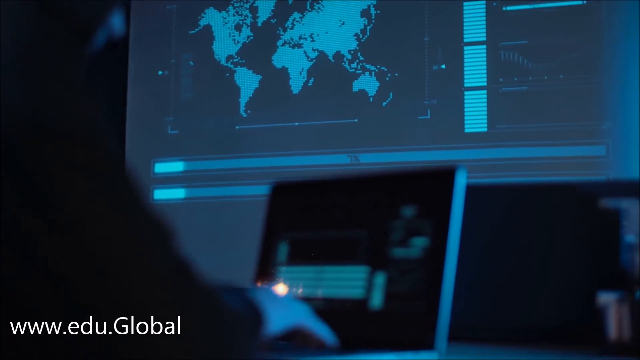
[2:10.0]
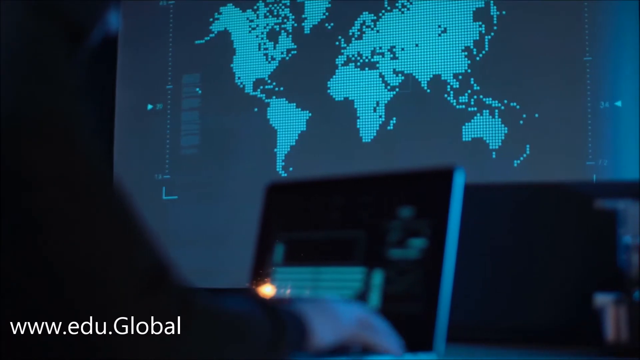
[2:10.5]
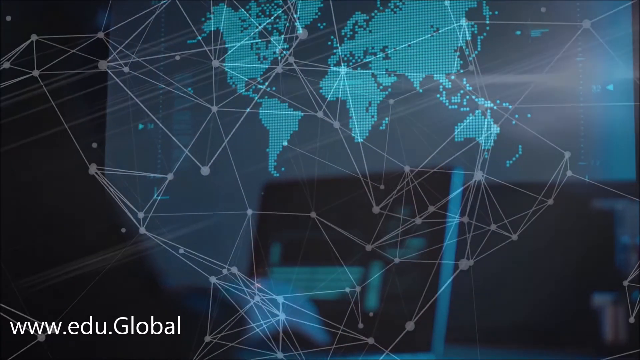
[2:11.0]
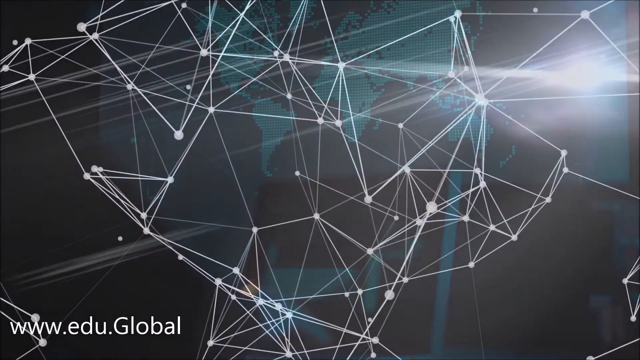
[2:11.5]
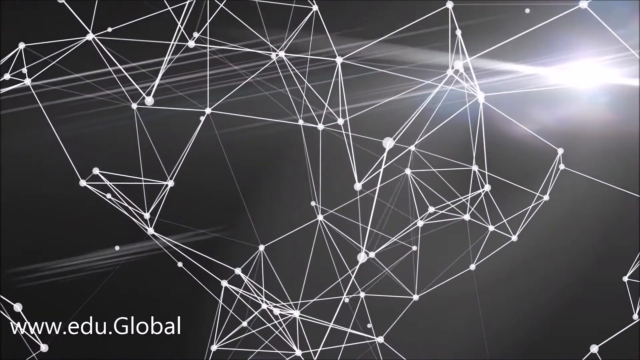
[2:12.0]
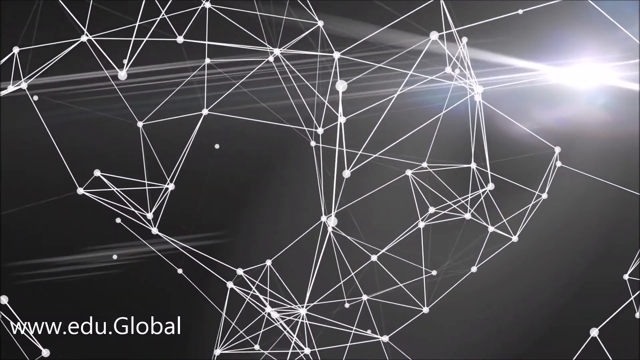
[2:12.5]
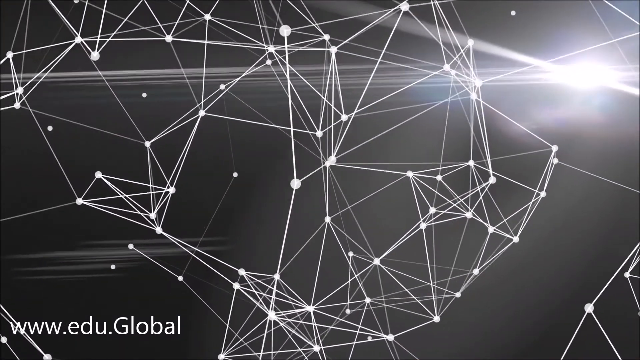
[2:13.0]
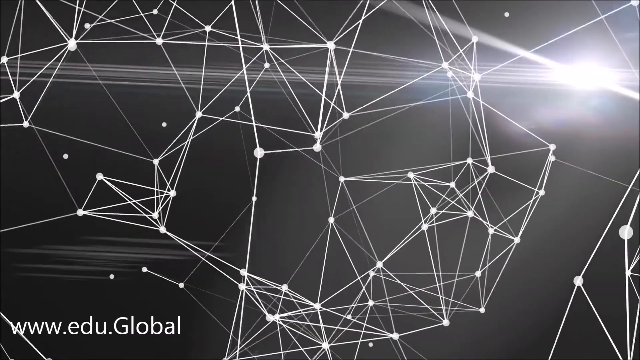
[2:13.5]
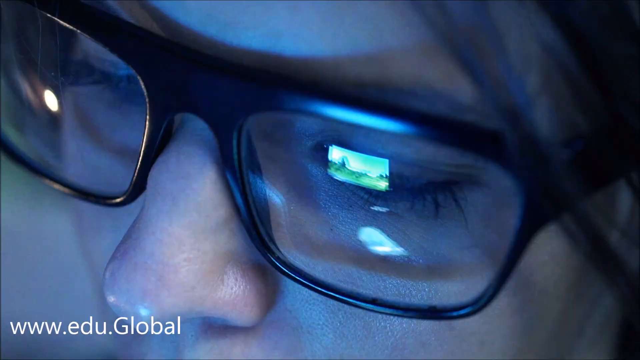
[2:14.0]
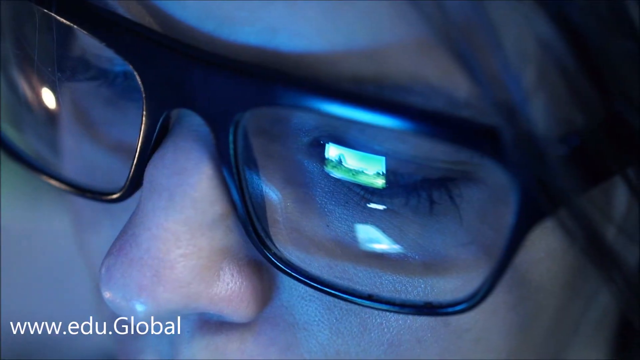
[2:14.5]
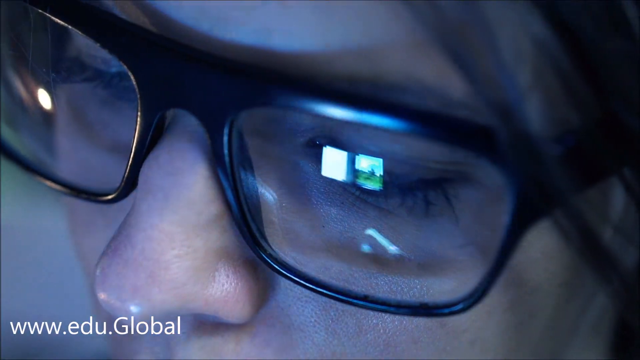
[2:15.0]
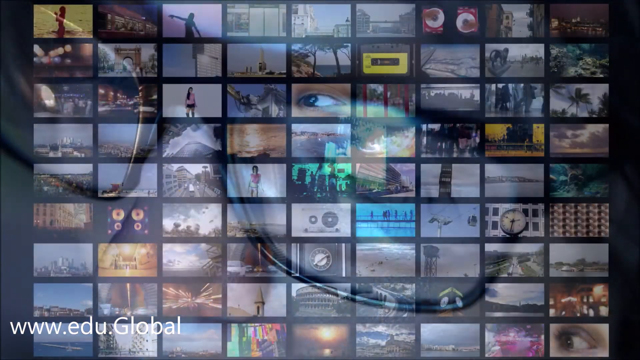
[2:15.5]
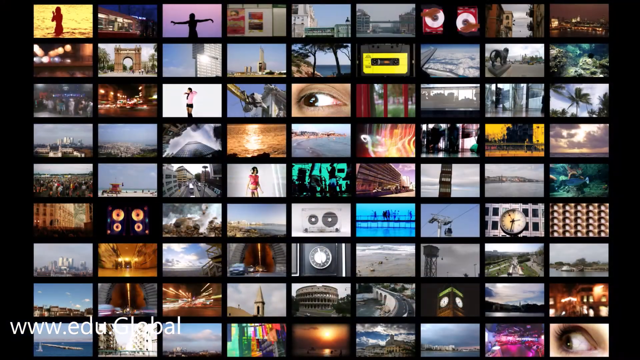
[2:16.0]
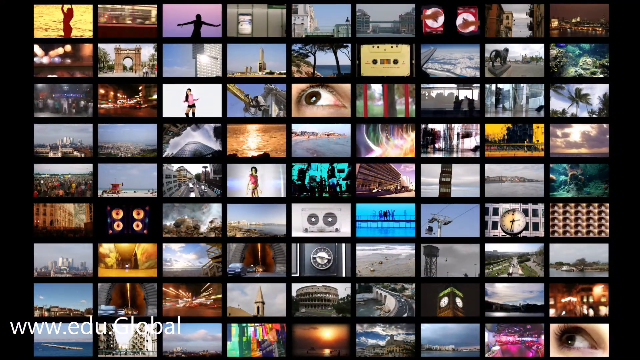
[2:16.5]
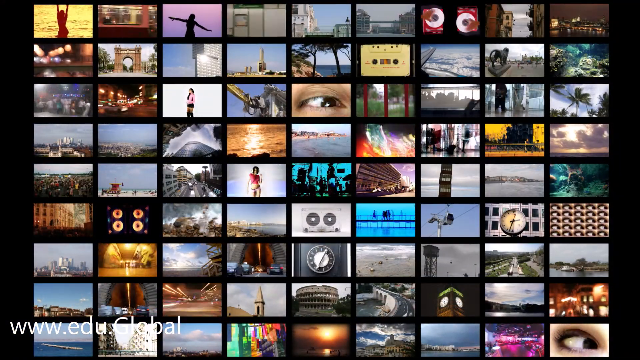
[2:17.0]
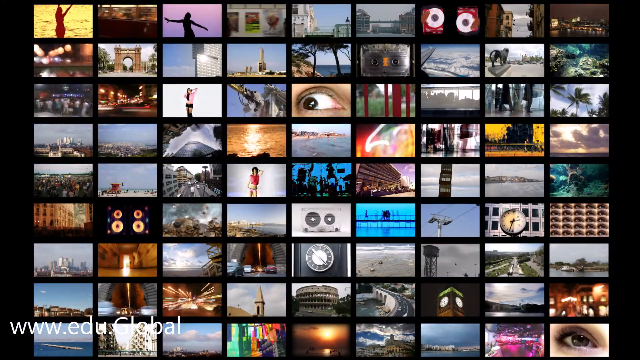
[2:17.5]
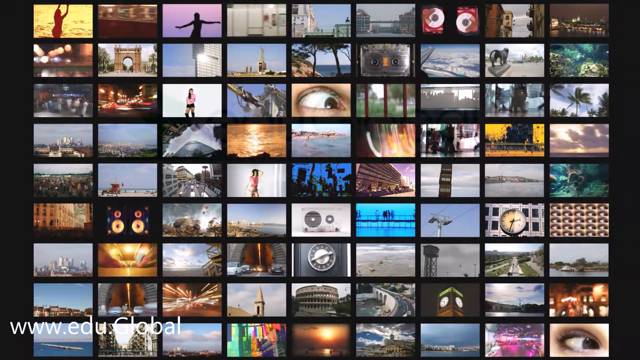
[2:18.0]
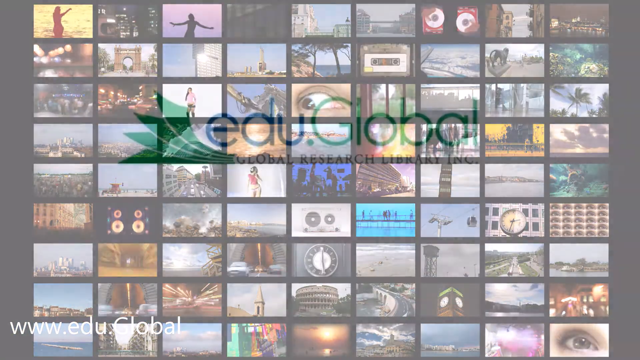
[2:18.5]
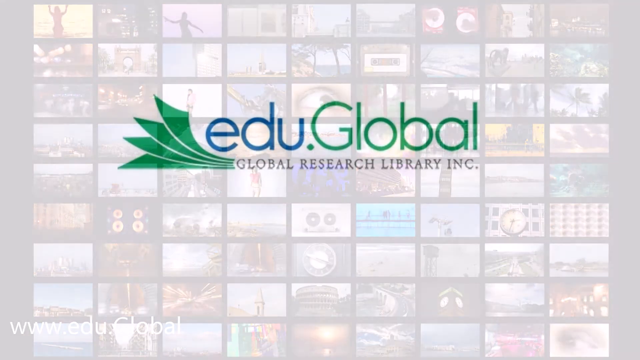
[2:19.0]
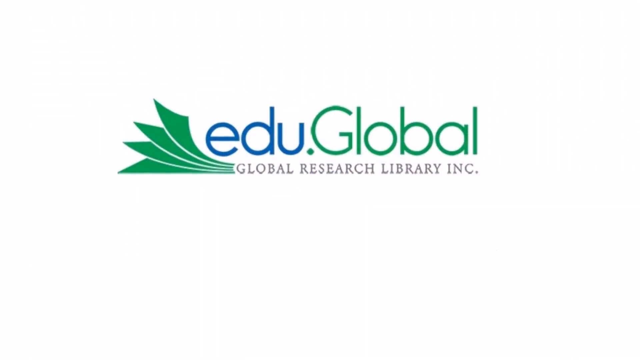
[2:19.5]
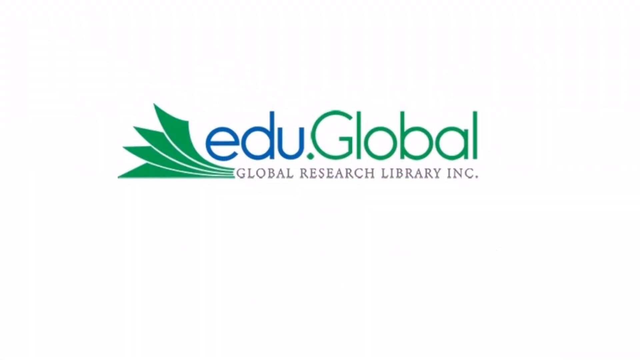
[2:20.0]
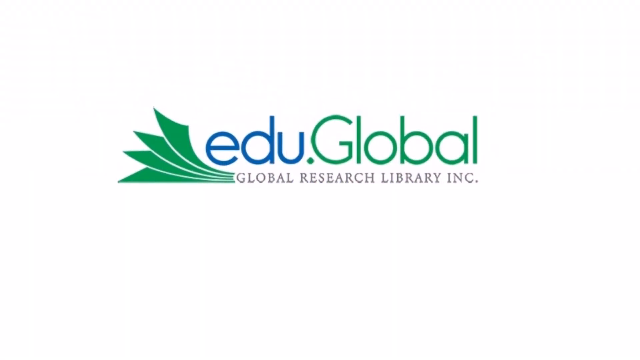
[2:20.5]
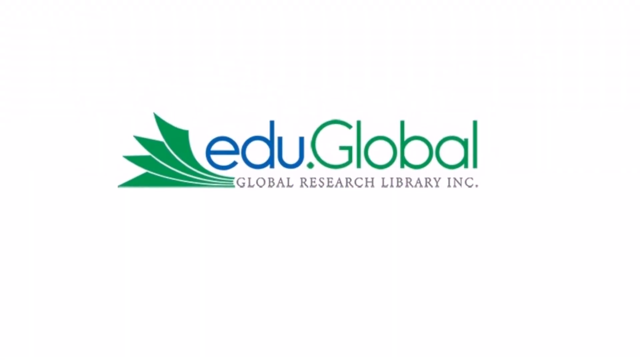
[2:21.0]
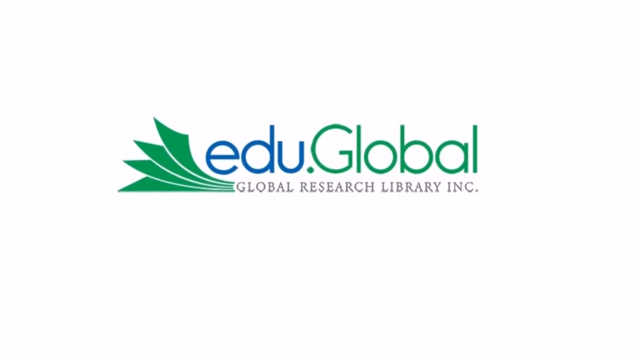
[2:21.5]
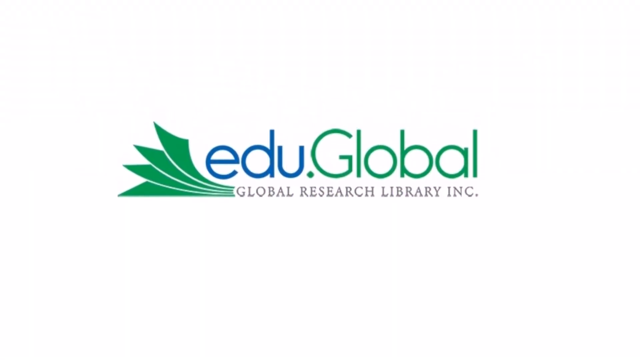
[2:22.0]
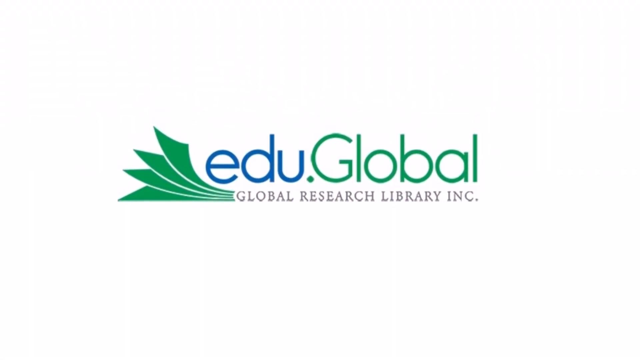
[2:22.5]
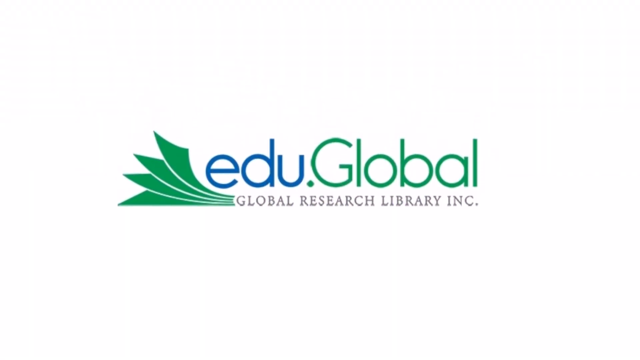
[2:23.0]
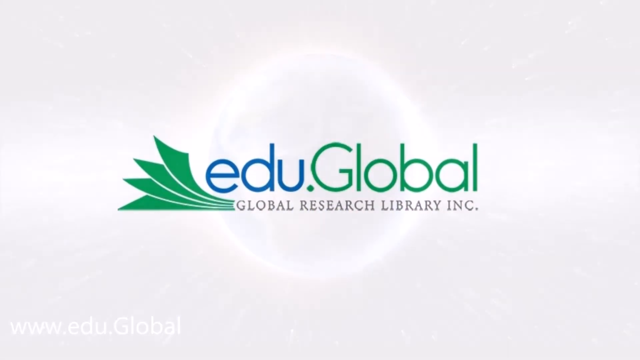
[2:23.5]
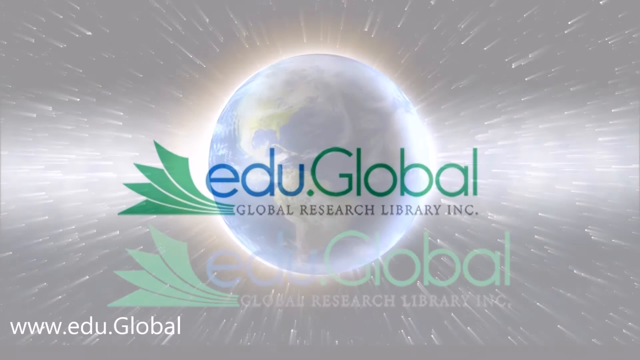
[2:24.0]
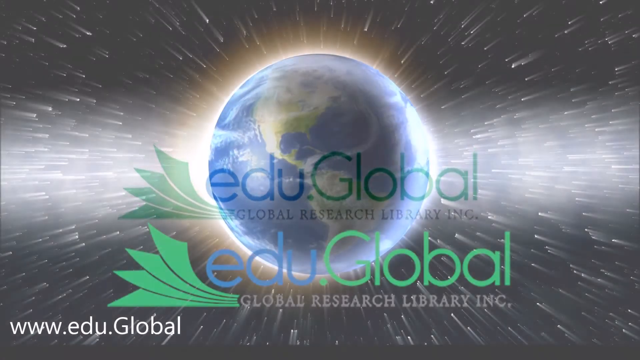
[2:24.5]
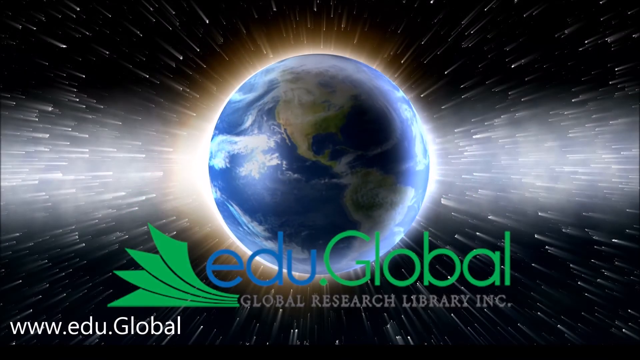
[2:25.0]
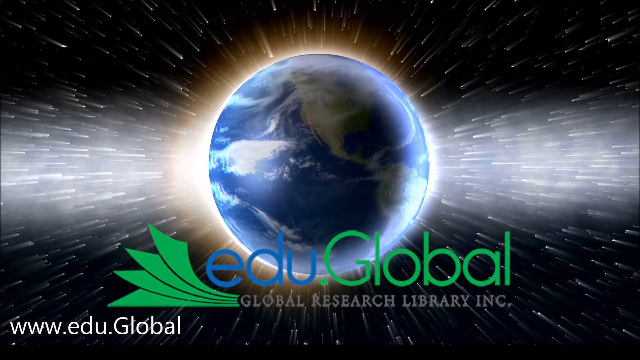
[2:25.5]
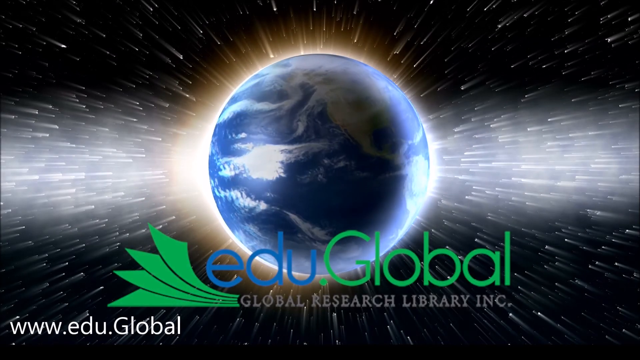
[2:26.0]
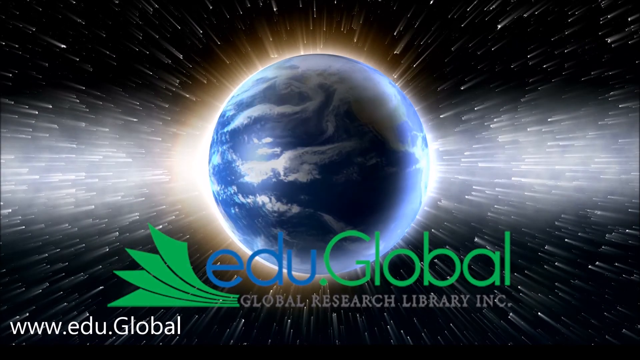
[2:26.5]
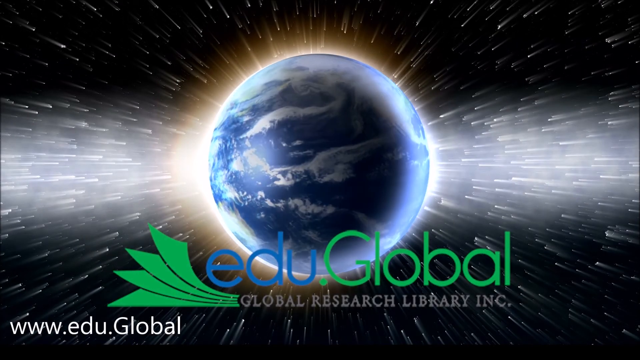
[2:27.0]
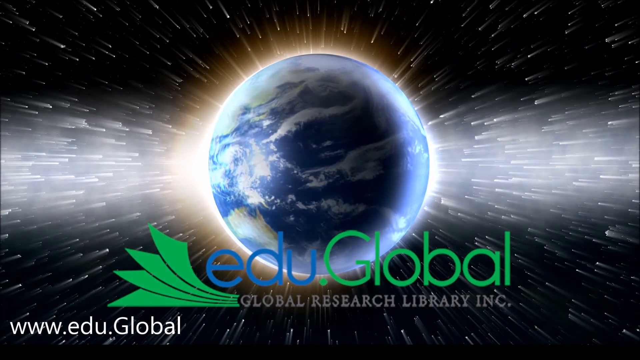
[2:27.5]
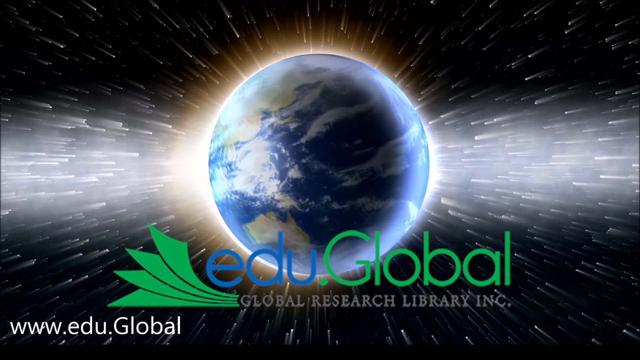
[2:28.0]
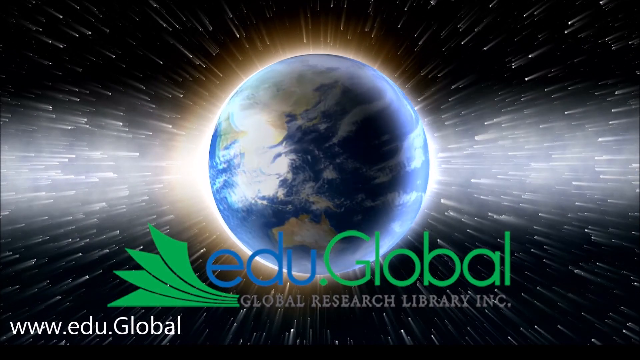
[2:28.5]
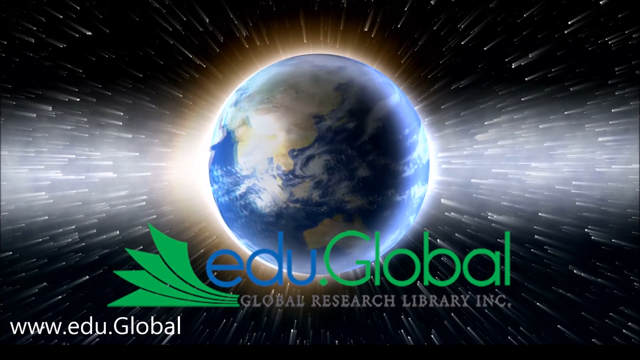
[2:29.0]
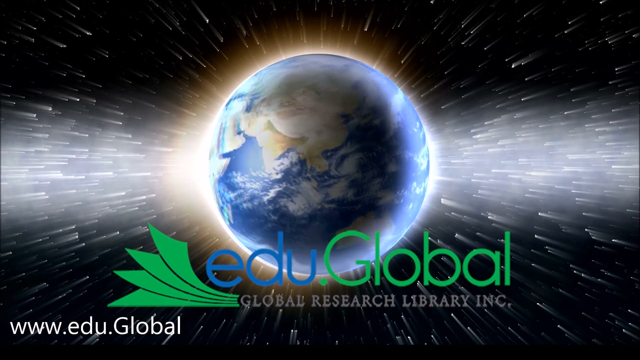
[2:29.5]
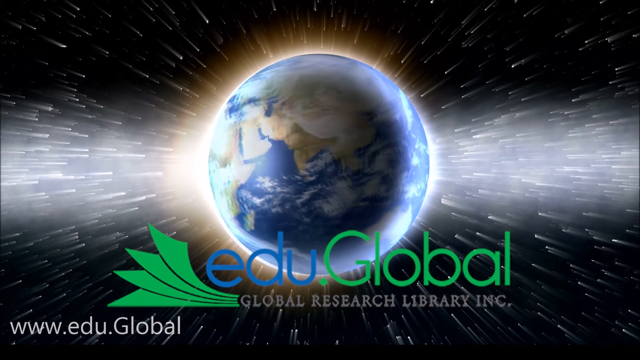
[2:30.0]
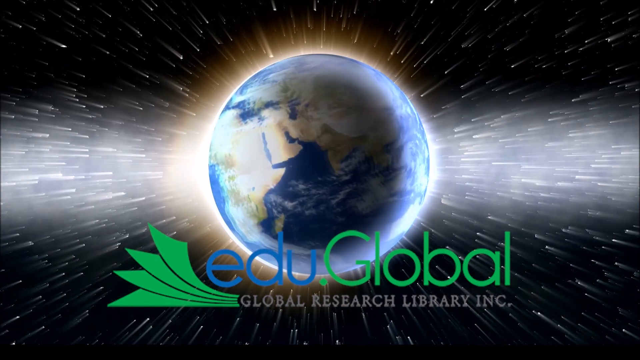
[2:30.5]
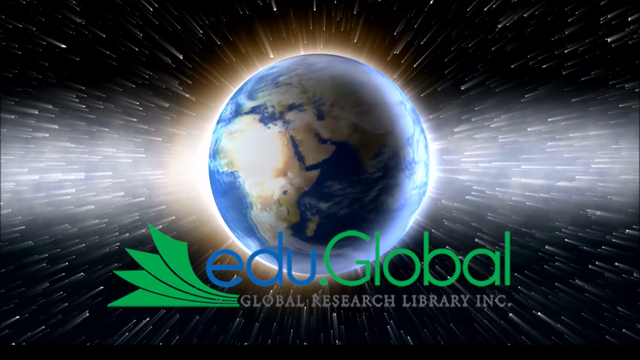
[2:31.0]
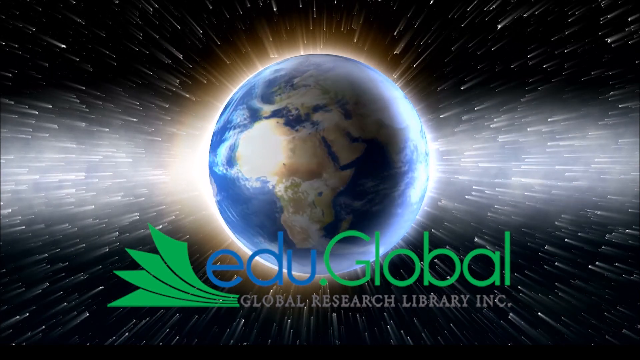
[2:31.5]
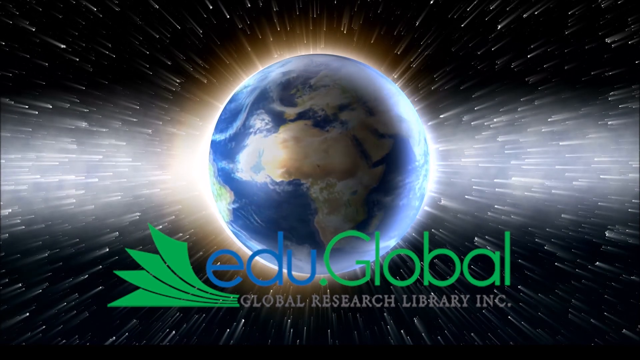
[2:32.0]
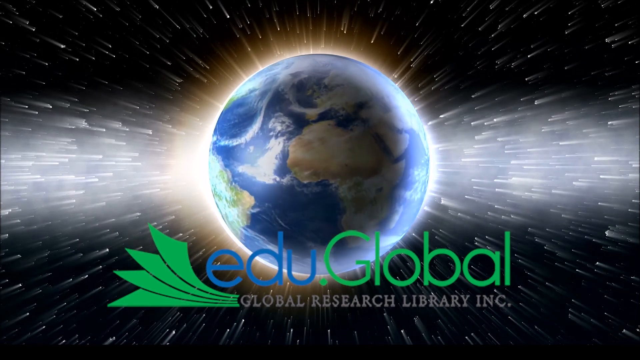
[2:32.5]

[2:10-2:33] The blue room has blue lights, and a very large projector displays a map of the world in a blue tone; the whole scene has that tone. A transition follows of fractals floating in space with a light coming from the right side, a small animation between scenes. Then the glasses of a lady focused on something reflect what is possibly a screen, a television or a monitor. Next comes a collage of several videos playing simultaneously, in roughly nine columns and nine rows, each unrelated to the others, with scenes such as an eye, records and a marsh. The video ends on a blank screen with the text "edu.global" in the center, and then planet Earth reappears rotating on itself, just as at the beginning of the video.